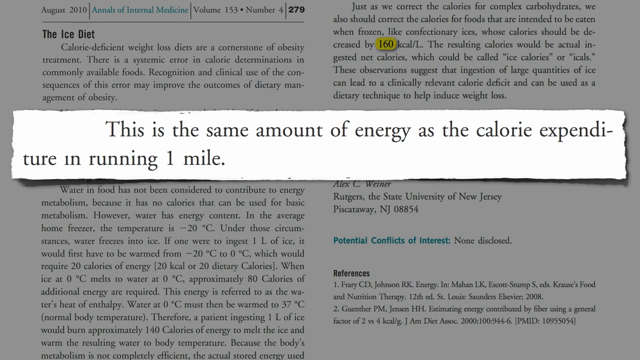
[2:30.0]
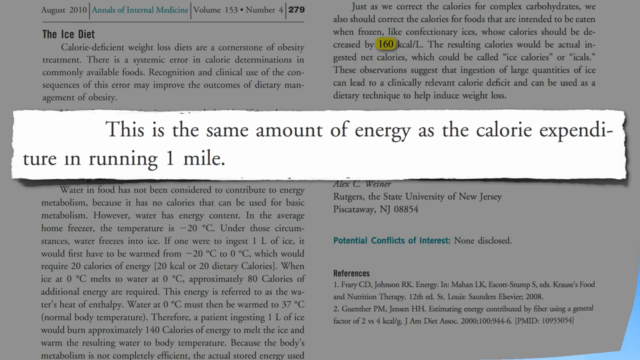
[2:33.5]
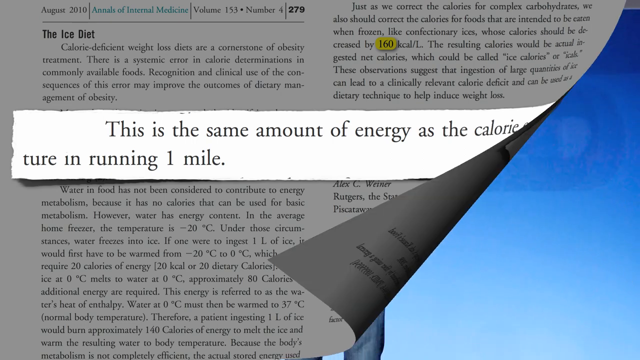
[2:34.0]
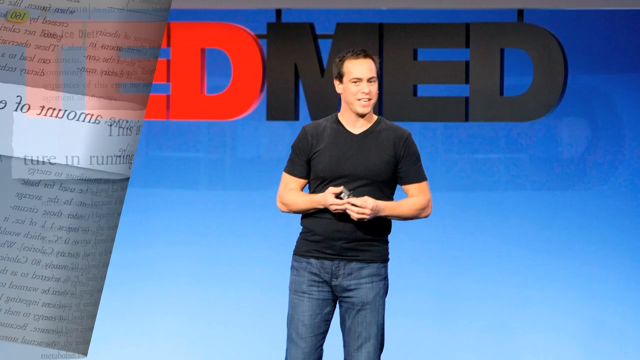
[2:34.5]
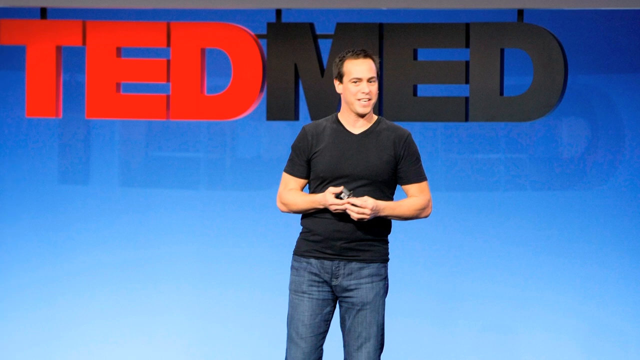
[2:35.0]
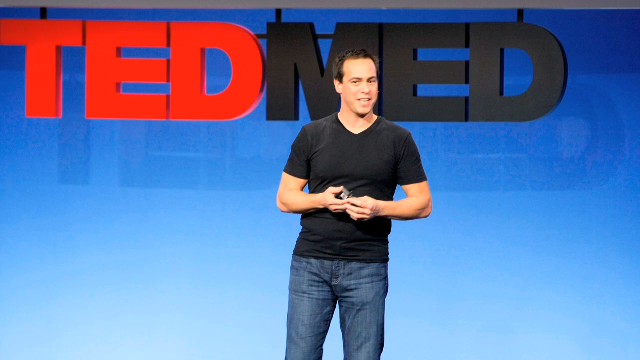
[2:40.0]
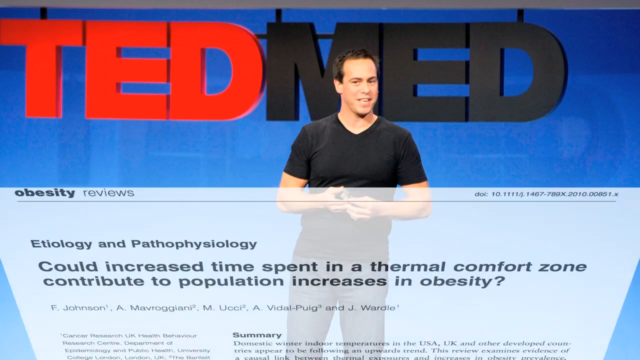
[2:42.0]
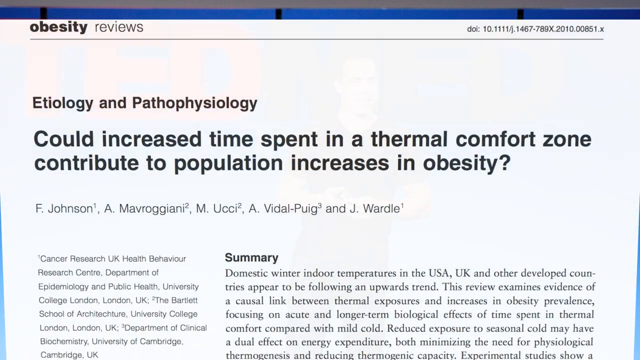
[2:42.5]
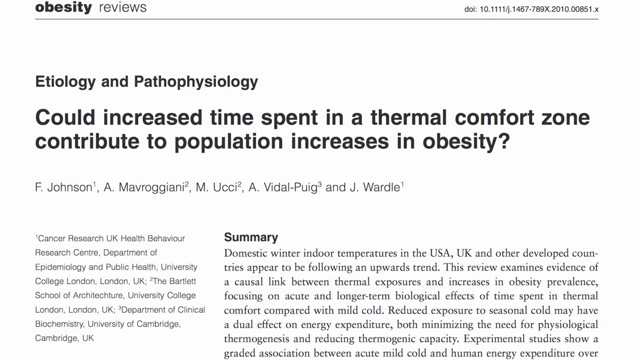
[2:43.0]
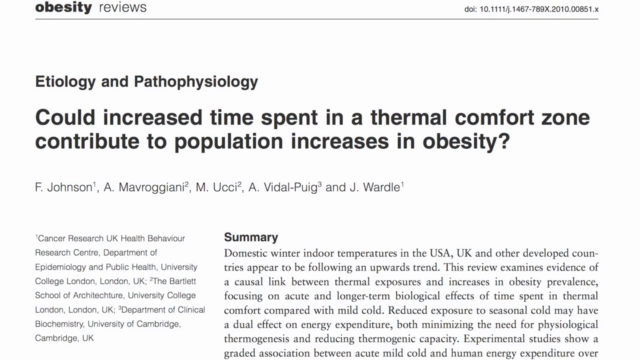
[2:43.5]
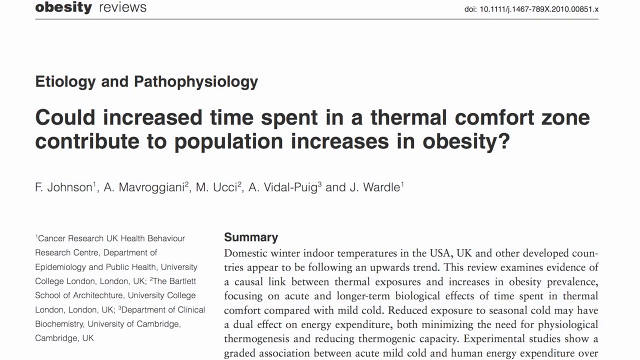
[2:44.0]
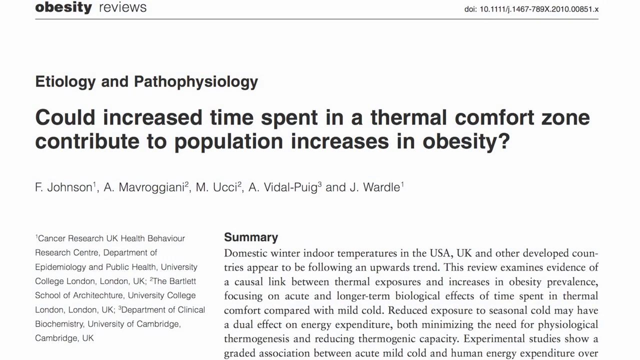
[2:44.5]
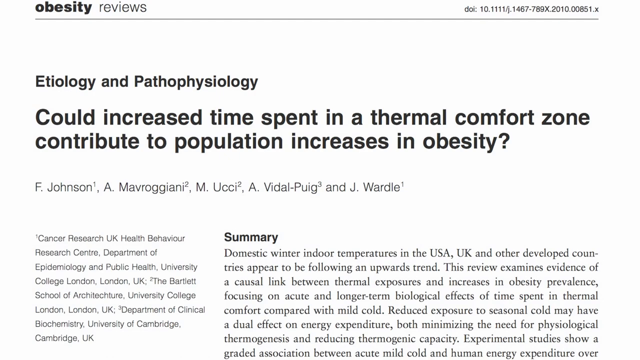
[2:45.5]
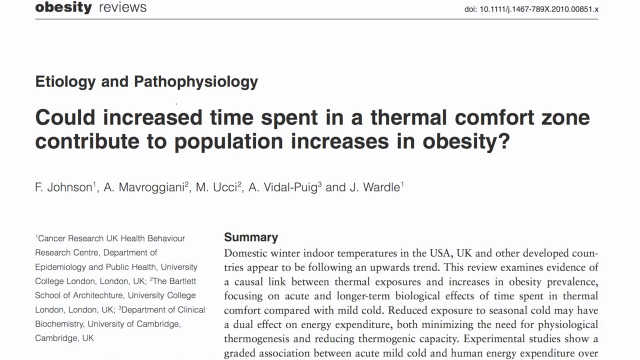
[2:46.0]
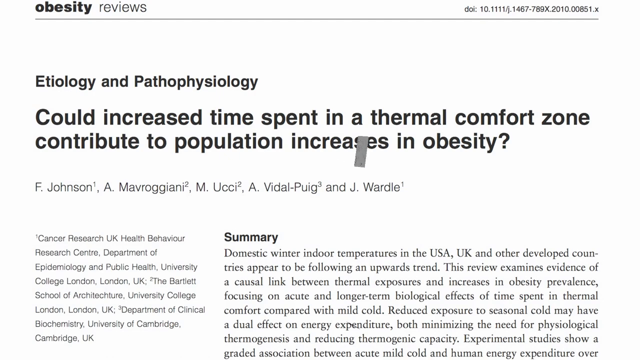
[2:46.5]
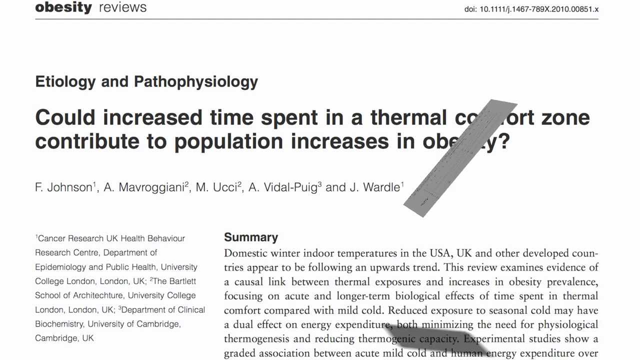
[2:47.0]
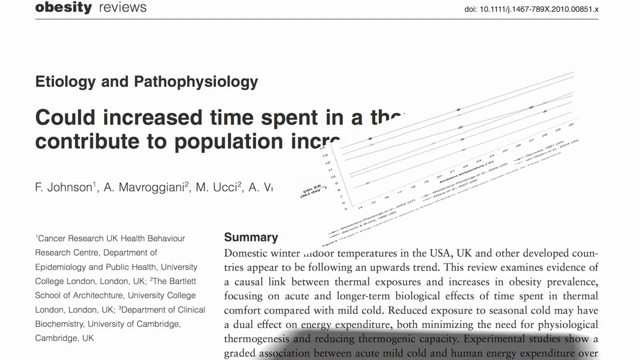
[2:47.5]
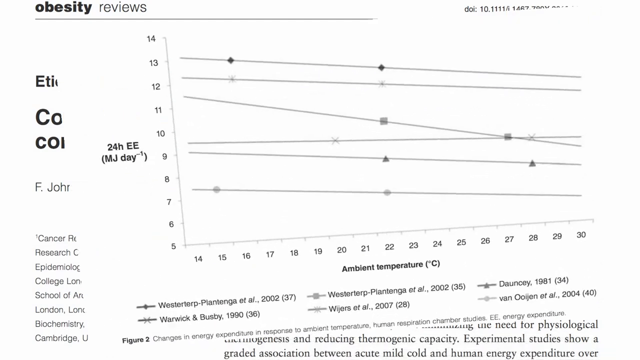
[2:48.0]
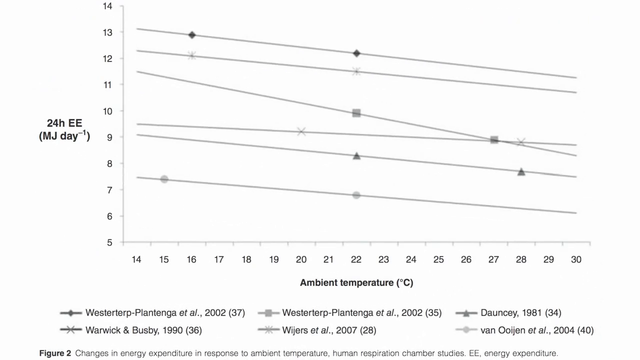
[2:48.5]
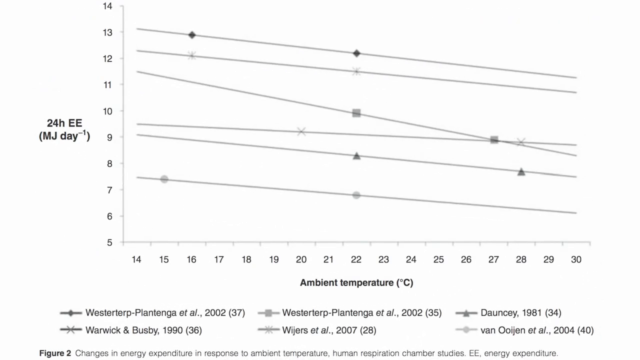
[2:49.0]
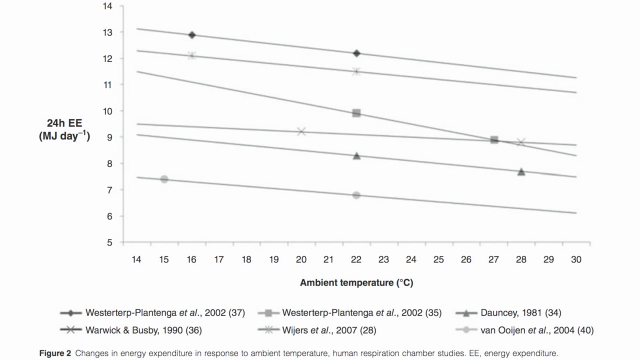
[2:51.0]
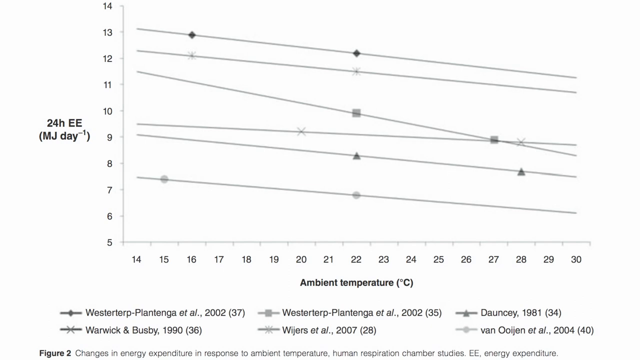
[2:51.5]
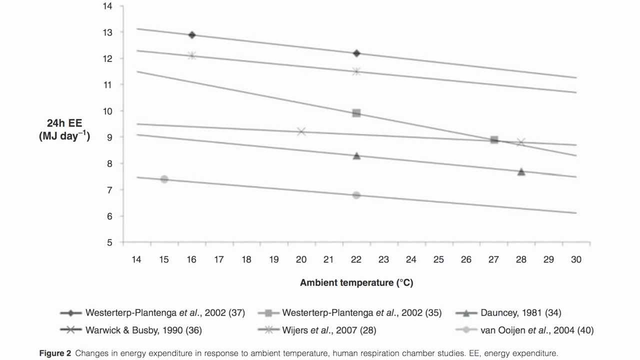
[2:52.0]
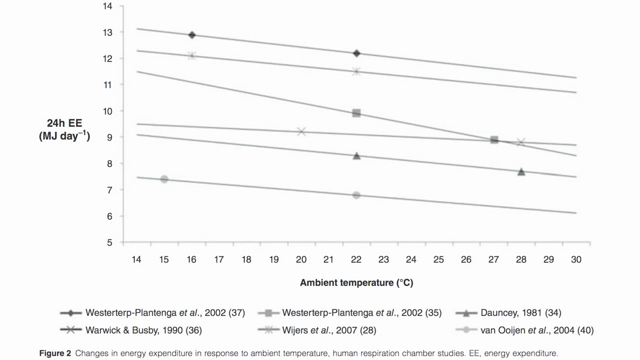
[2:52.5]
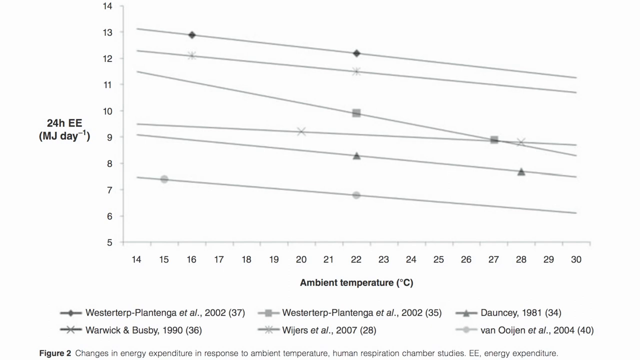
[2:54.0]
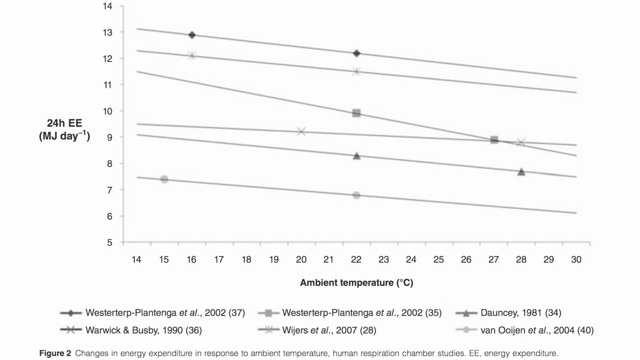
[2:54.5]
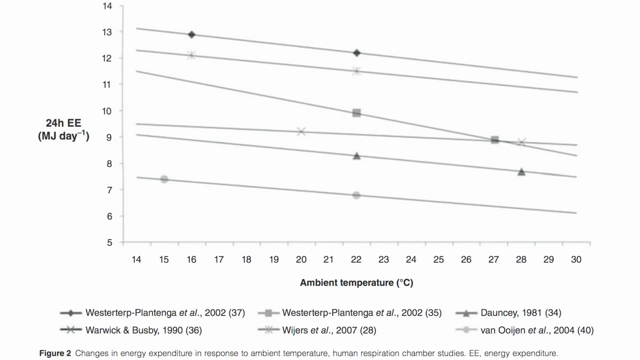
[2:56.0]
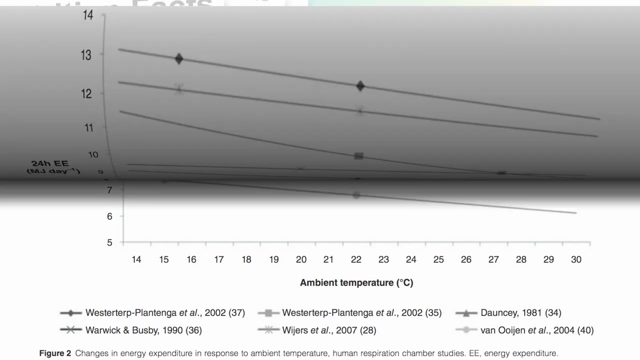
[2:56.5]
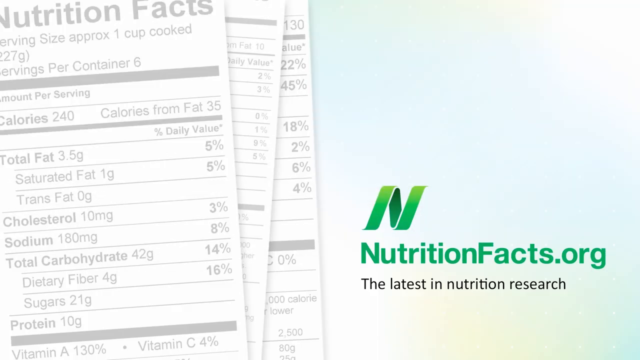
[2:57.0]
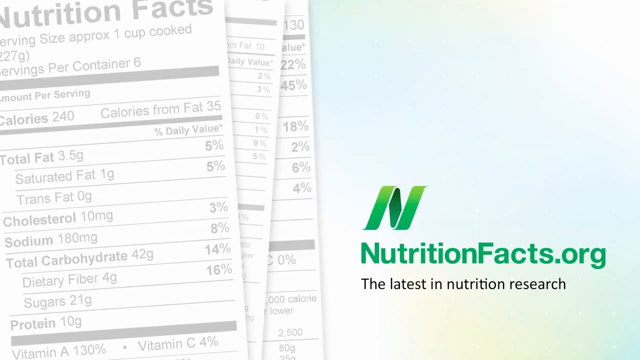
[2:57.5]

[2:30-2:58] A white background with black text shows "August 2010 Annals of Internal Medicine, Volume 153, Number 4, 279" at the very top. Below that in black text is "the ICE diet, calorie deficient weight loss diets are a cornerstone of obesity treatment. There is a systemic error in calorie determinations in commonly available foods. Recognition and clinical use of the consequences of this error may improve the outcomes of dietary management of obesity." In the middle of the screen, bold highlighted text reads "this is the same amount of energy as the calorie expenditure in running one mile." More text below reads "water in food has not been considered to contribute to energy metabolism because it has no calories that can be used for basic metabolism. However, water has energy content in the average home freezer. The temperature is minus 20 degrees C. Under those circumstances, water freezes into ice. If one were to ingest one L of ice, it would first have to be" warmed from minus 20 to zero degrees C, "which would require 20 calories of energy, 20 kcal or 20 dietary calories. When ice at zero C melts to water at zero C, approximately 80 calories of additional energy are required."